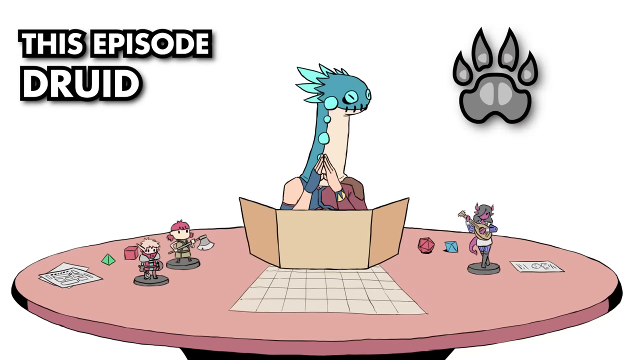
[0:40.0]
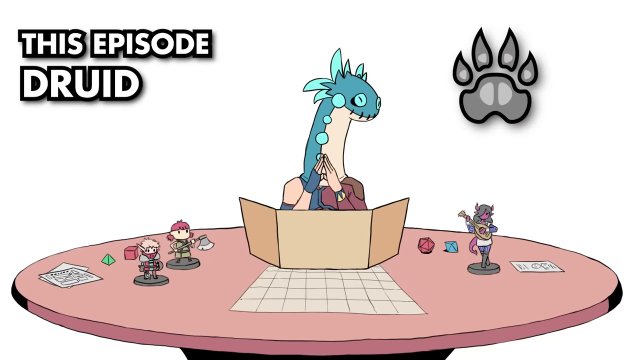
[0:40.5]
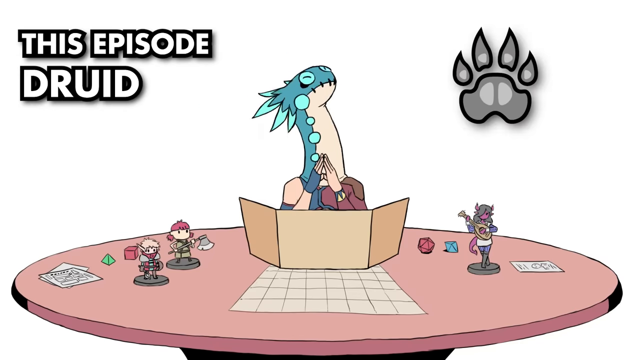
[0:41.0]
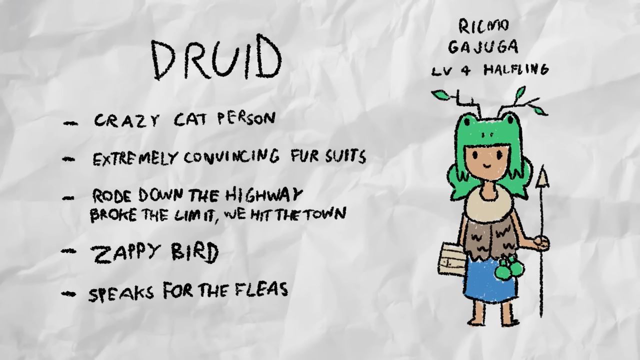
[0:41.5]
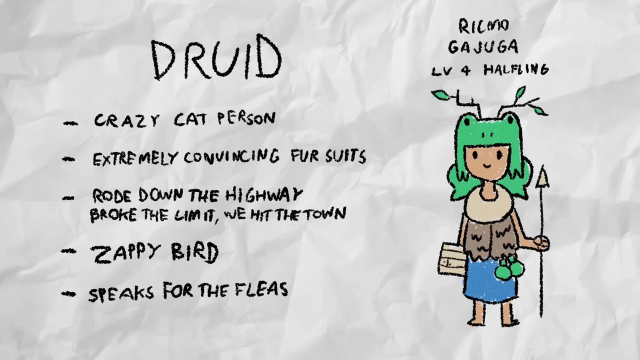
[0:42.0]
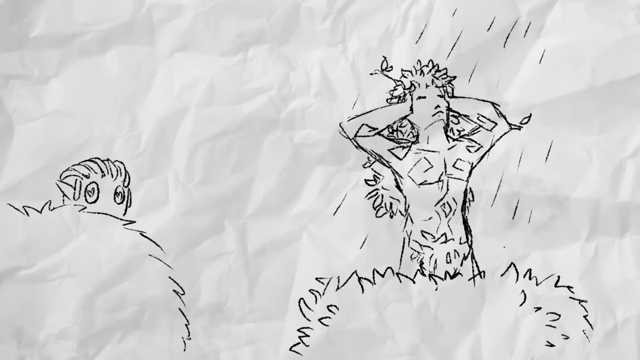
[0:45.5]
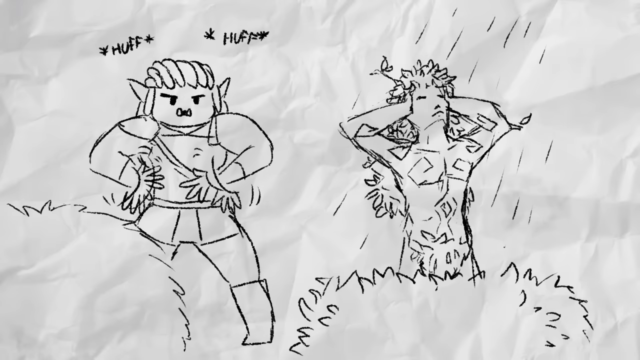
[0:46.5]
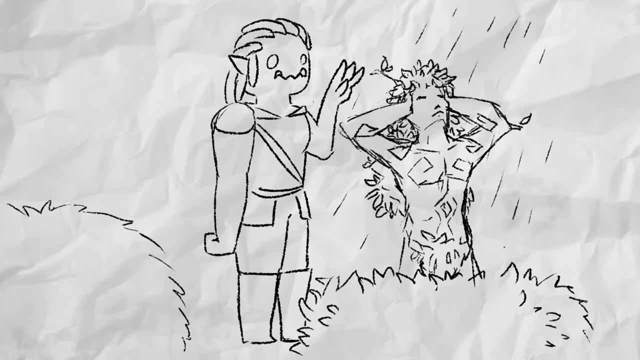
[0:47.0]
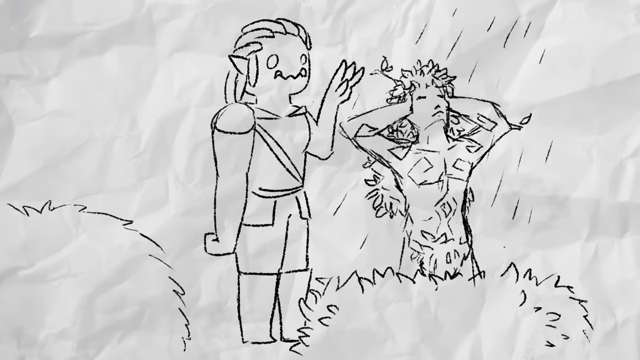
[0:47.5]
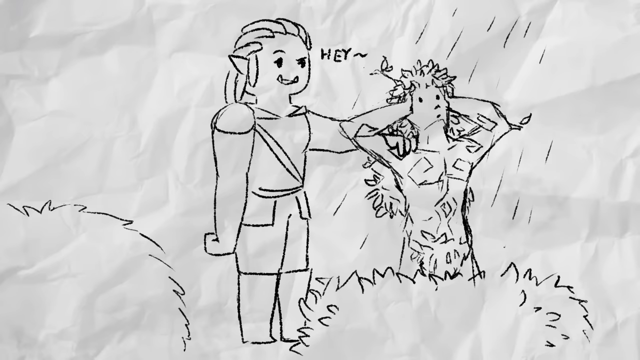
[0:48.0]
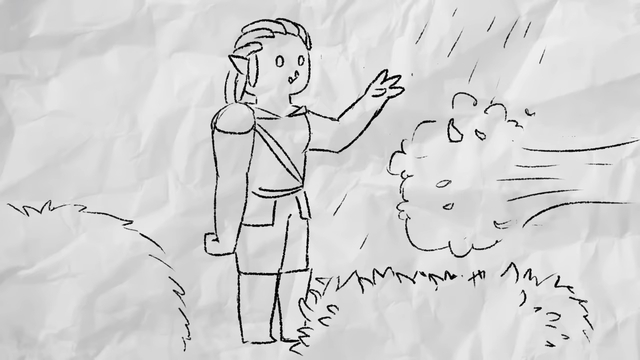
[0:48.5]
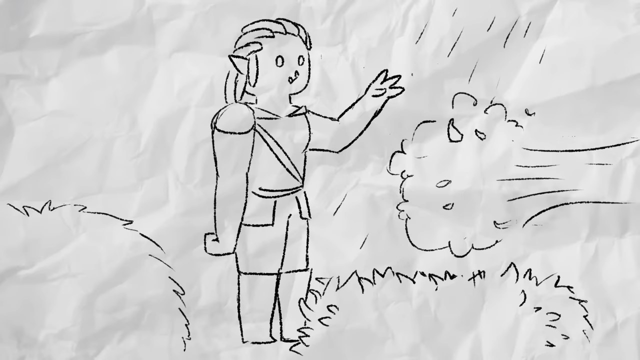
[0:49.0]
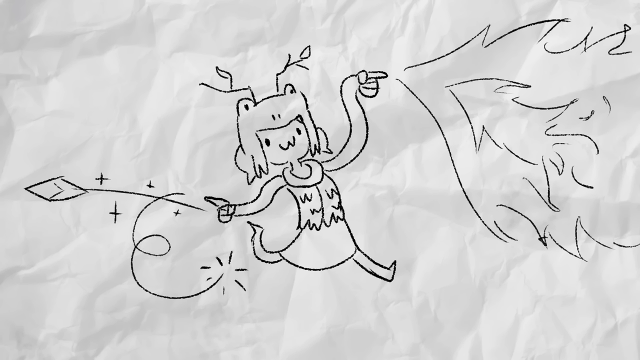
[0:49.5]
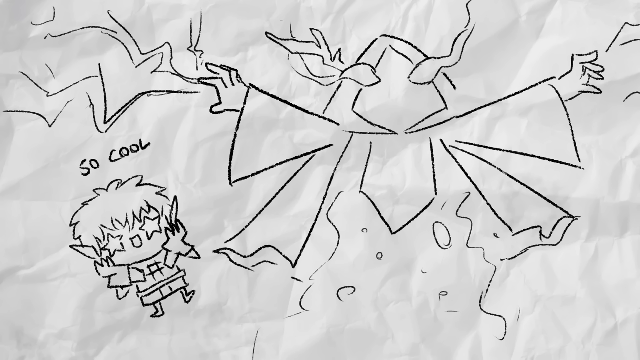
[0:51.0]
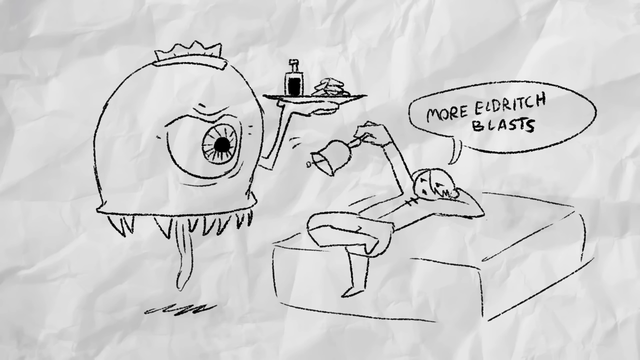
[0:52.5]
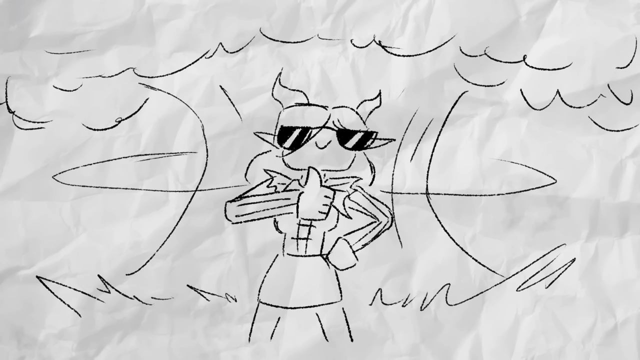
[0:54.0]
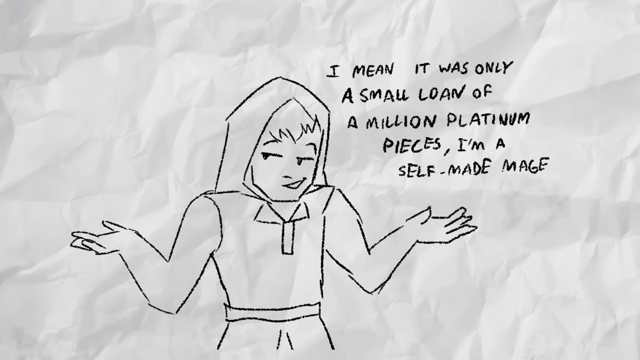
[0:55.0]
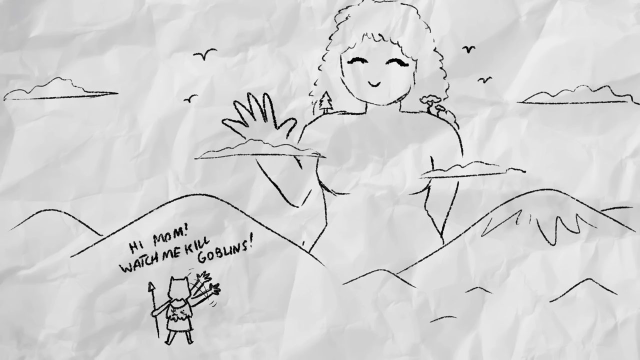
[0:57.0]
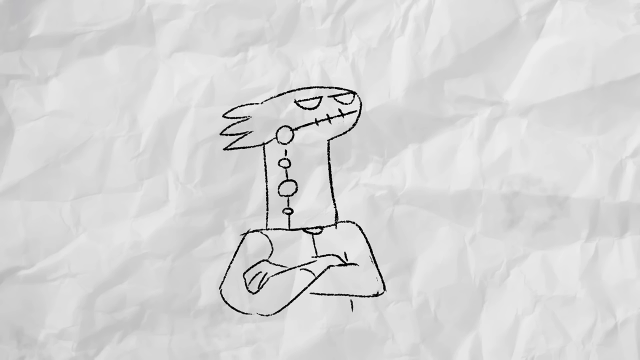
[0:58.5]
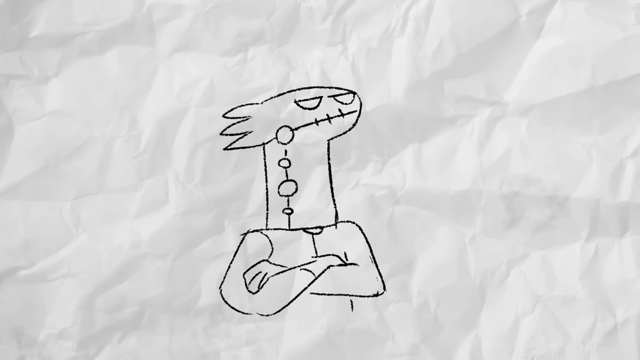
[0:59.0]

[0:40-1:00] A title card says "This Episode, Druid." An animated dragon character sits behind what looks like a piece of paper standing on edge on a table. He has human hands folded in front of him, and there are figurines on the table. Next comes what looks like a hand-drawn paper with notes and a hand-drawn illustration. At the top it says "Druid," with bulleted points below reading "Crazy Cat Person, Extremely Convincing Fursuits, Road Down the Highway Broke the Limit, We Hit the Town, Zappy Bird, Speaks for the Fleas." Above the illustration it says "Ricmo, Gajuga, LV4 Halfling." The illustration looks like a person holding a spear, with a green frog hat and green wings. Pencil drawings of similar cartoon characters follow. A creature with elf ears and fangs approaches another creature that looks like it has leaves, taps it on the back and says "Hey," and the leaf creature runs off. A black and white pencil drawing shows the earlier character with the frog hat, who appears to have flames coming out of one of her hands. There is an illustration of a character that looks like it is wearing a hood, and another of a character lying on a bed shaking a bell as a creature that looks like an eyeball floats over holding a tray in one hand. A pencil drawing of a male character who appears to be shrugging his shoulders has text written next to him that says, "I mean it was only a small loan of a million platinum pieces. I'm a self-made mage."